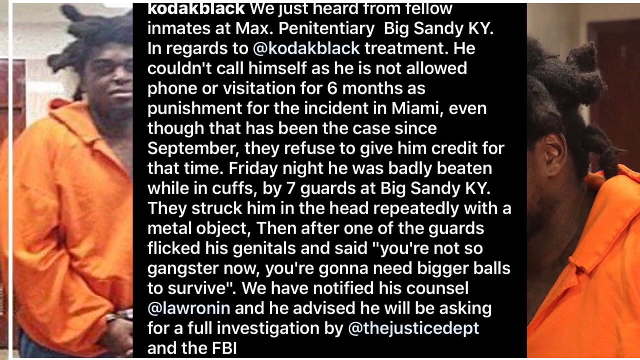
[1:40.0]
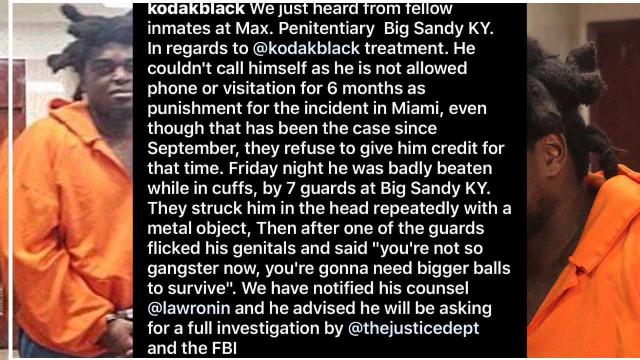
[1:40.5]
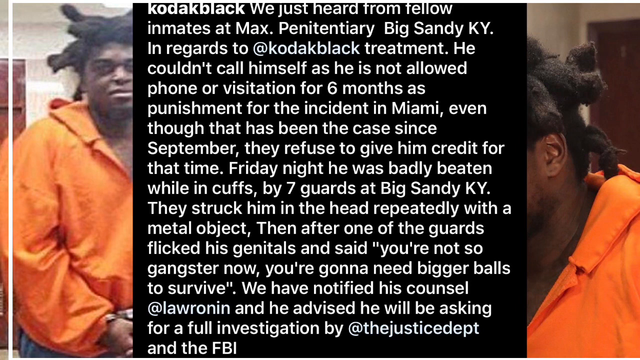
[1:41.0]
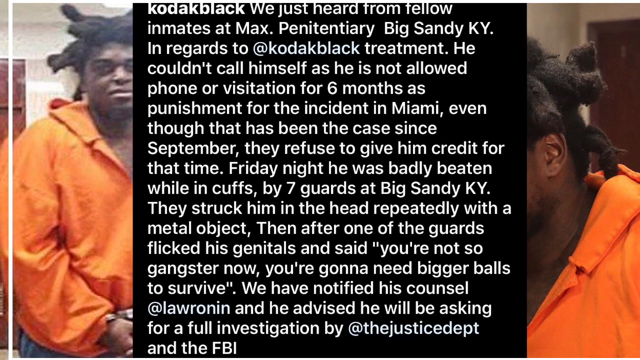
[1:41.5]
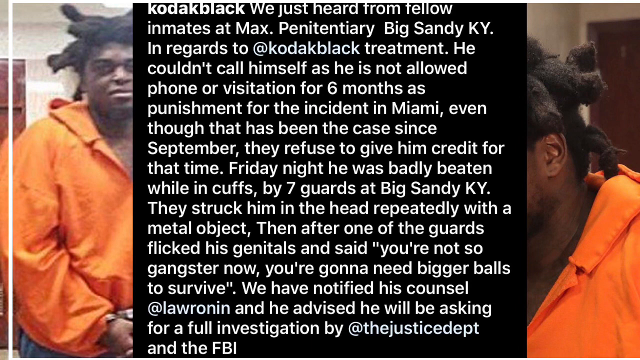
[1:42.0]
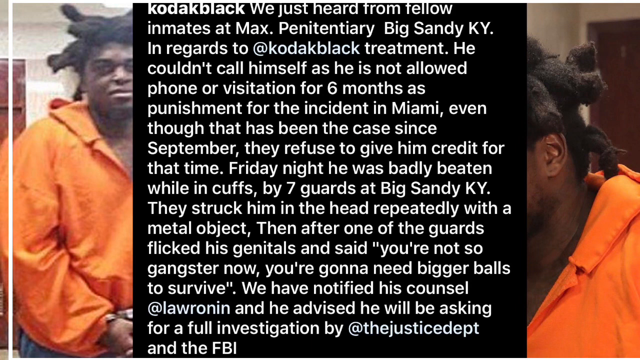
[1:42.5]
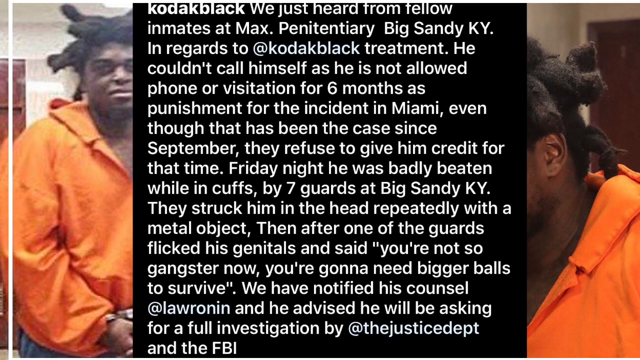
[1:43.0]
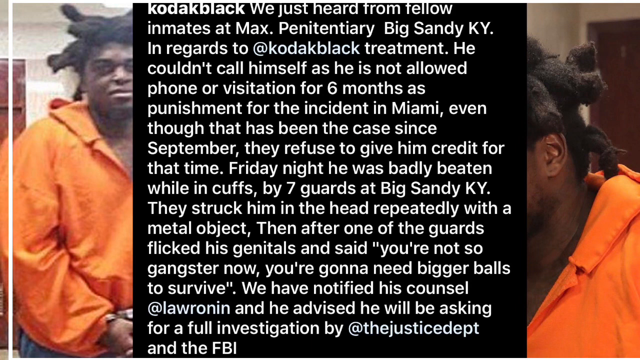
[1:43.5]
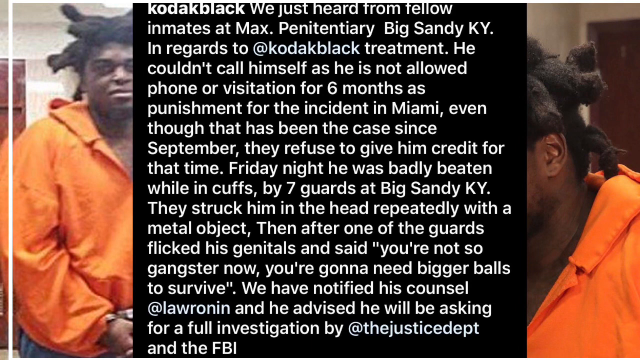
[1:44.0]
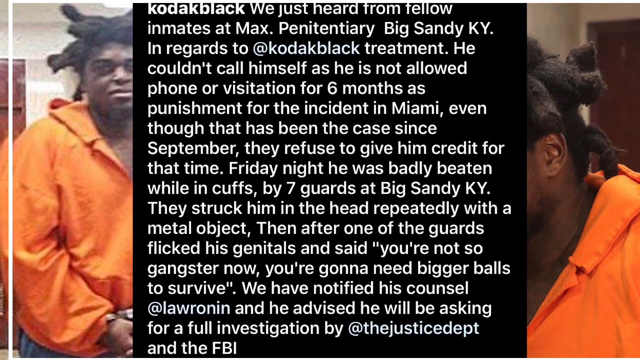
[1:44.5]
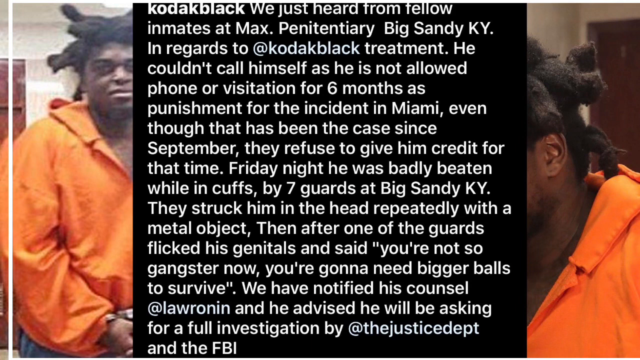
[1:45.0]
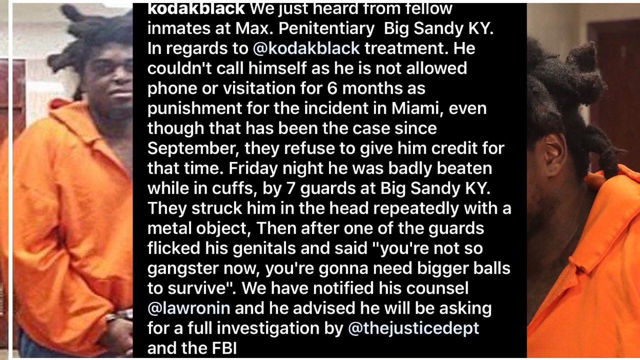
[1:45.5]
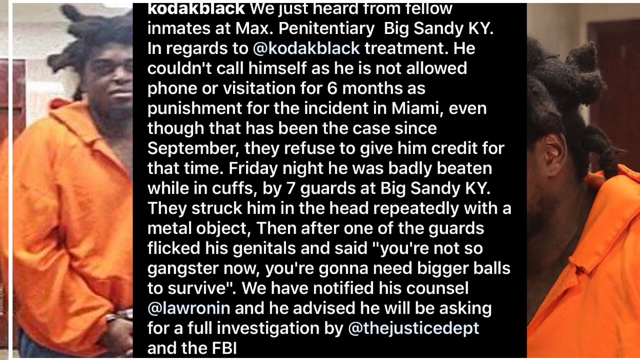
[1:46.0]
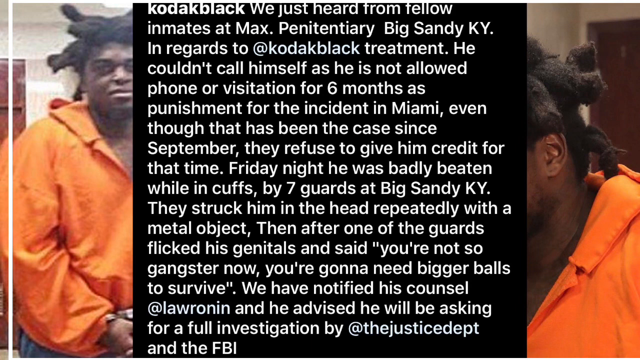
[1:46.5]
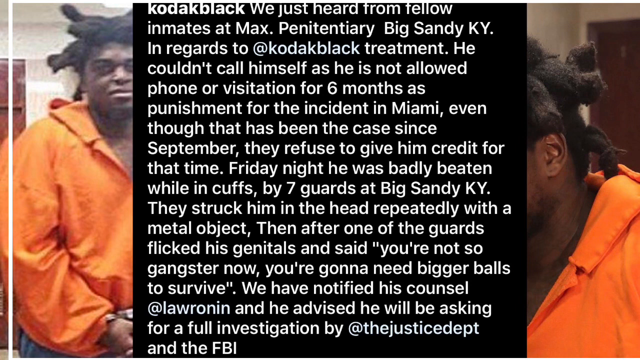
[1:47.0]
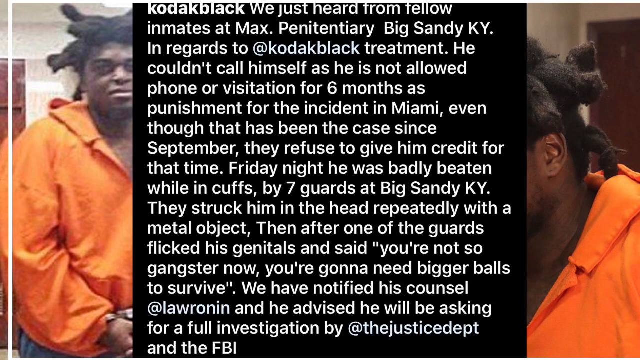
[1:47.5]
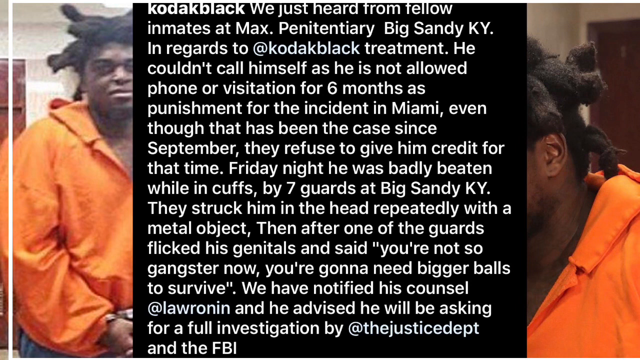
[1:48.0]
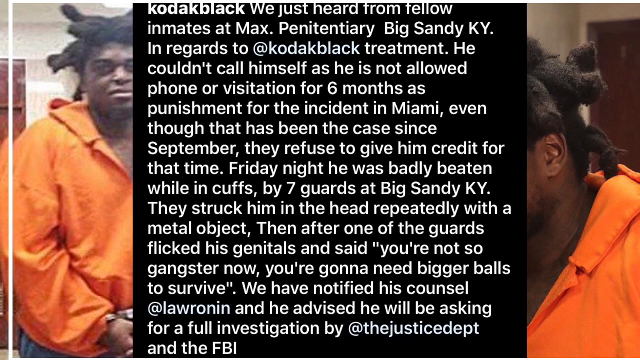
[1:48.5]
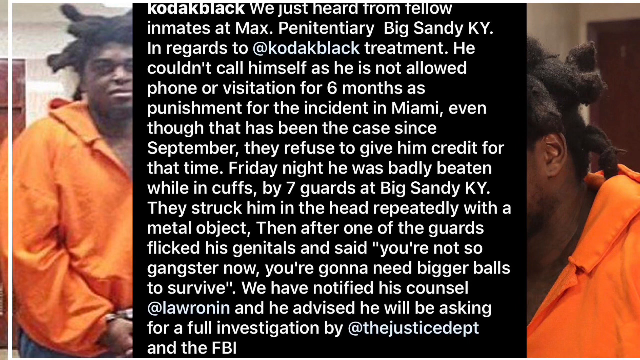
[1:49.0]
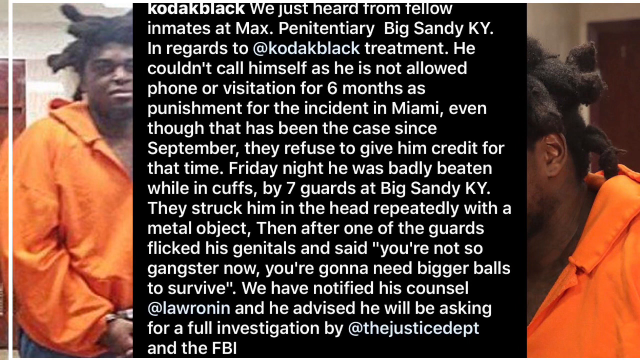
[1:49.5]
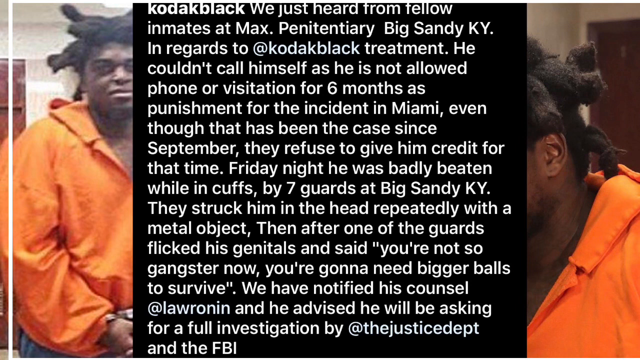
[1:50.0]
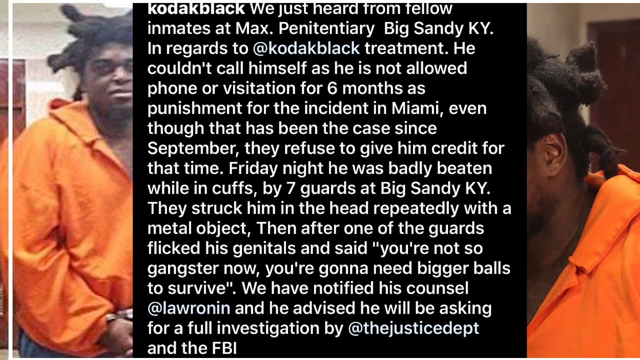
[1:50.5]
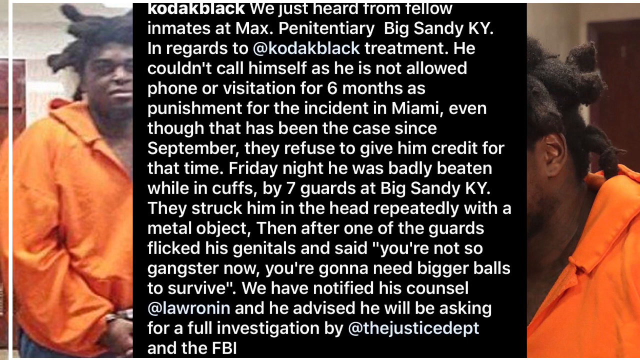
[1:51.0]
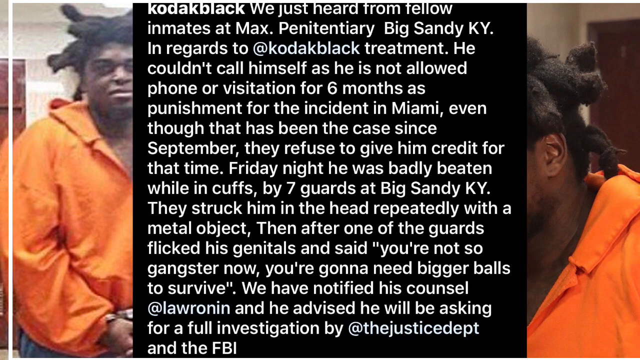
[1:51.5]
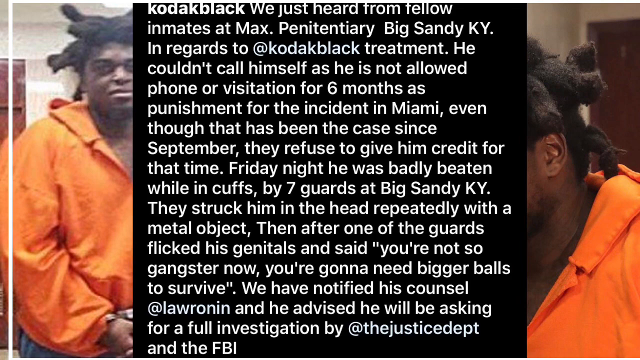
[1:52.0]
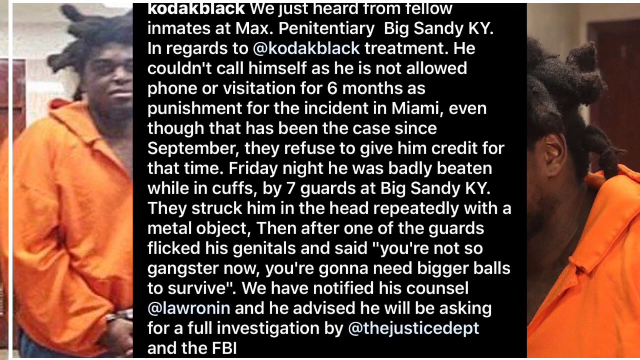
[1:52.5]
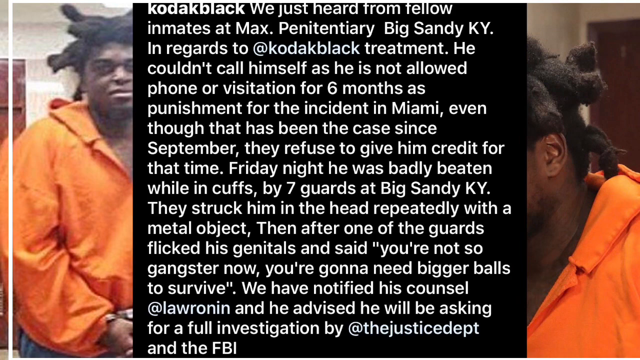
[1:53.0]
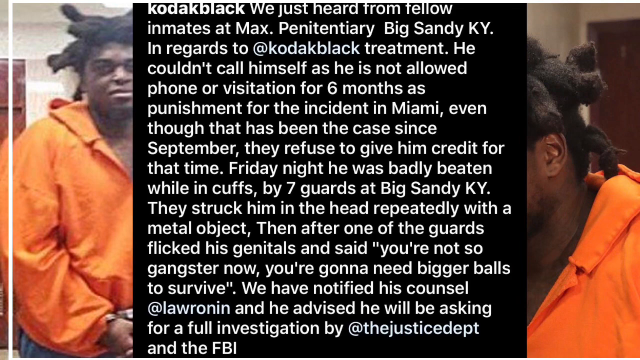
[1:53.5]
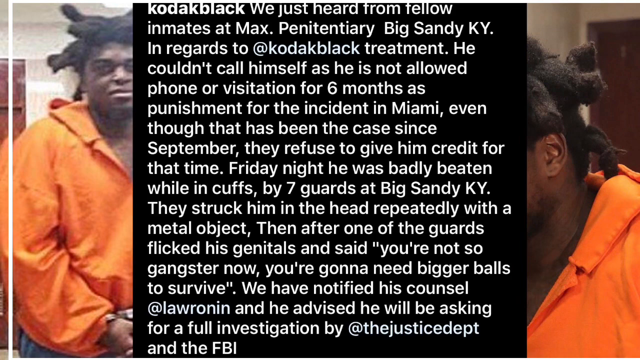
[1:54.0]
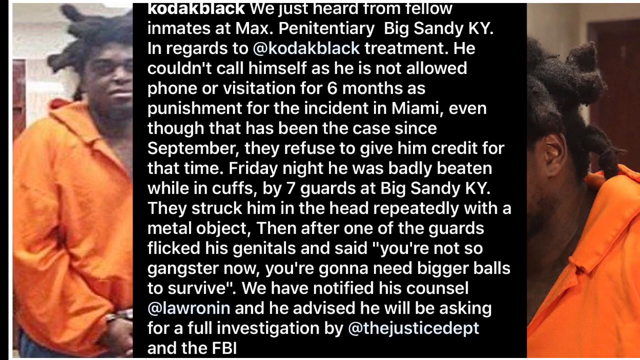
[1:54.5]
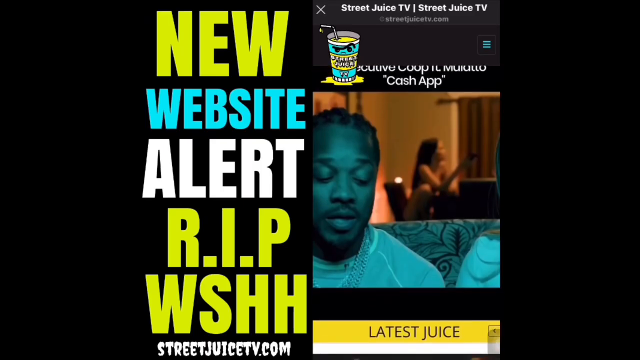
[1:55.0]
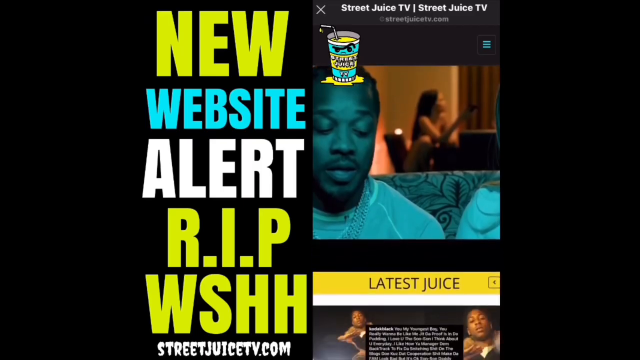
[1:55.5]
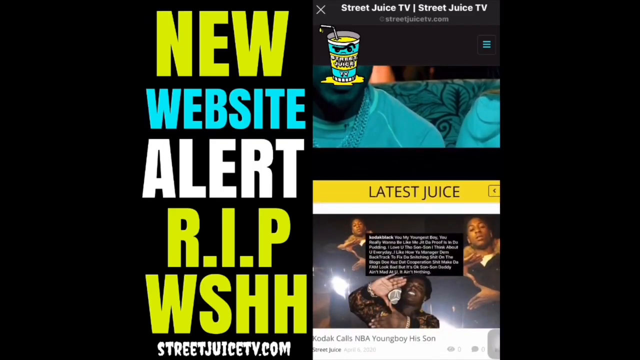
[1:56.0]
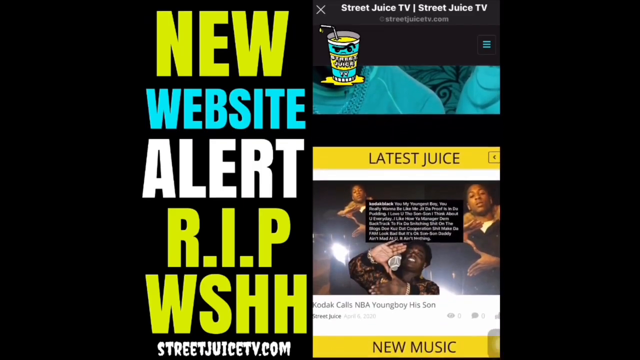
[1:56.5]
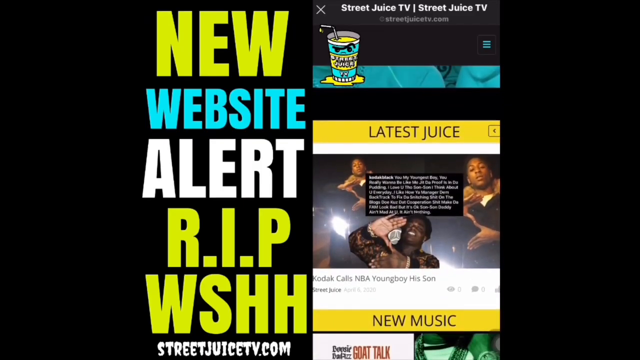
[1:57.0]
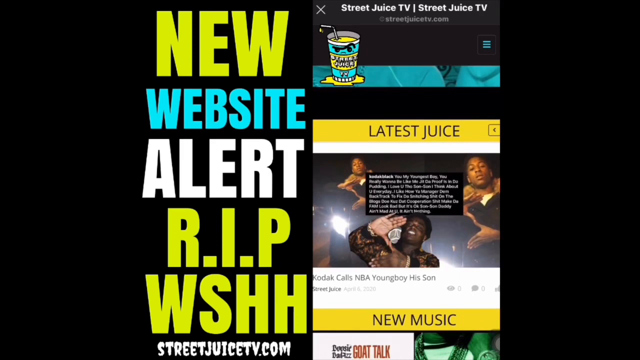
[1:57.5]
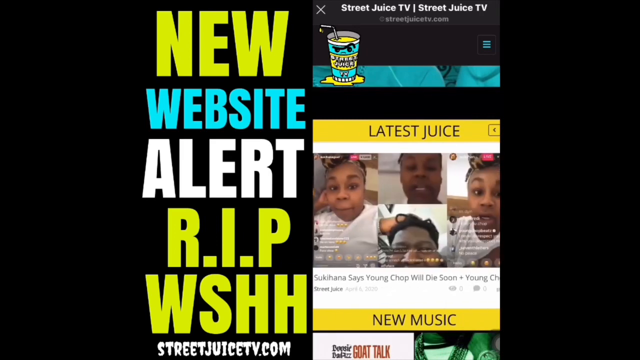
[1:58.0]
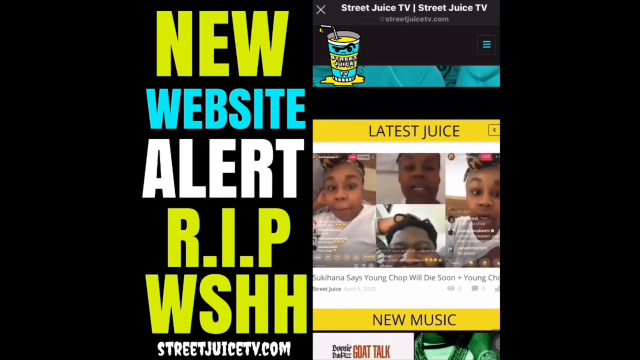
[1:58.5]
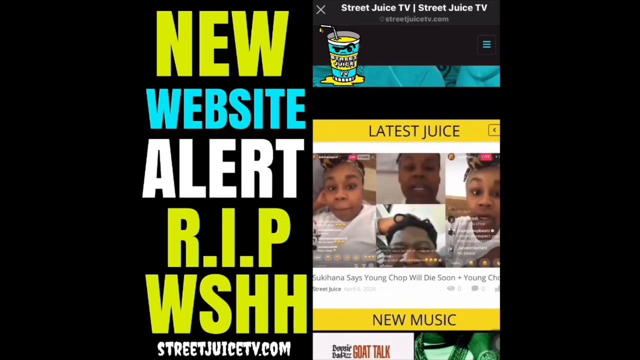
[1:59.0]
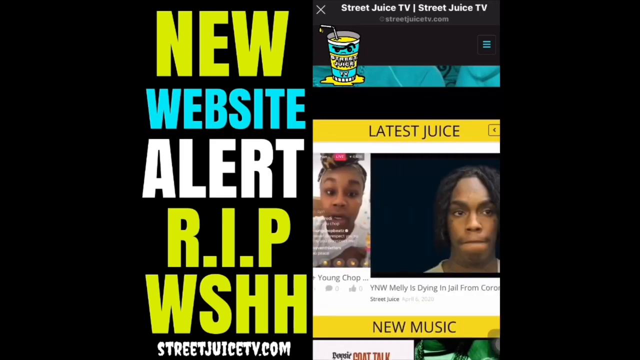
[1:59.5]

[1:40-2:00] The static black box with white text remains overlaid in the center on top of the side-by-side images of the man in the orange suit with a police officer next to him in each photo. Later, it abruptly transitions to a screen with a black background. On the left center portion, text from top to bottom says "NEW WEBSITE ALERT, R.I.P WSHH". On the right center portion is what looks like a phone screen showing a web browser at streetjuicetv.com, with the website's name and the web address below it and the same drawing of a cup of juice in the upper left of this feed. The page scrolls up past one video, then scrolls down to a title that says "Latest Juice" with a few images and some text below it, including "Kodak Calls NBA Youngboy His Son". Below that it says "New Music", while the feed swipes to the left to show more images, and then swipes left once more to show an image of another person.